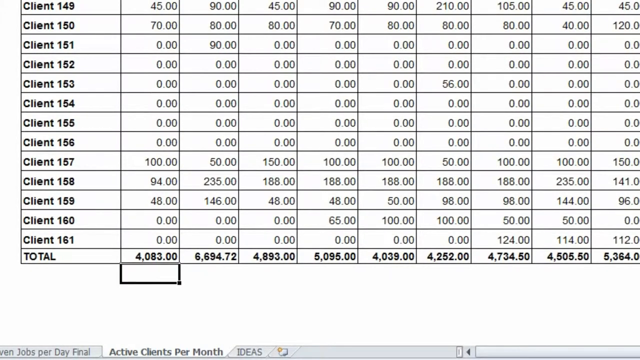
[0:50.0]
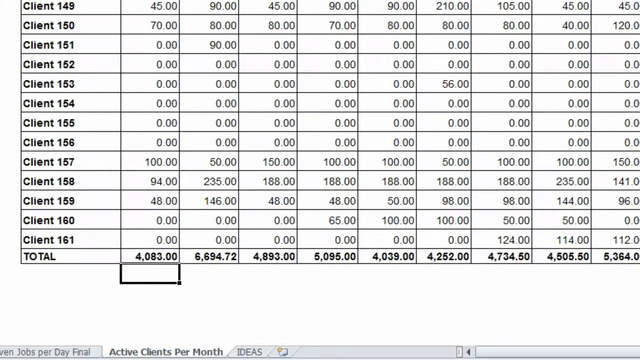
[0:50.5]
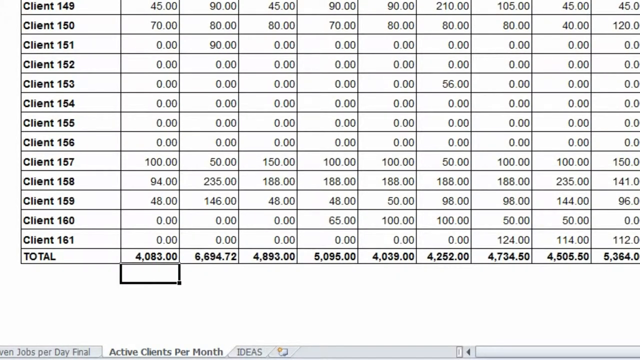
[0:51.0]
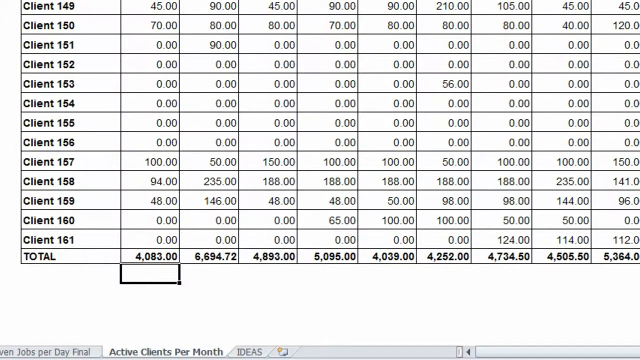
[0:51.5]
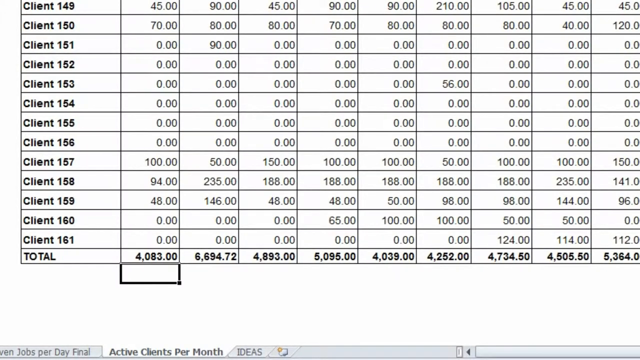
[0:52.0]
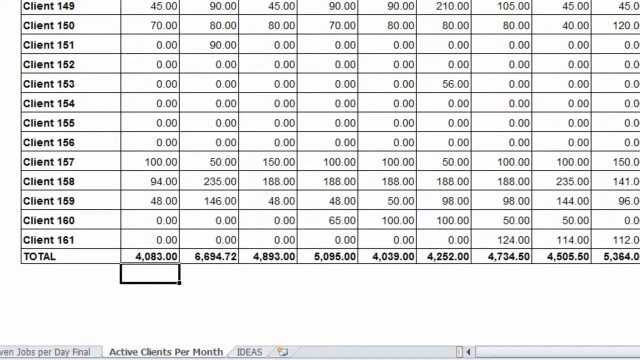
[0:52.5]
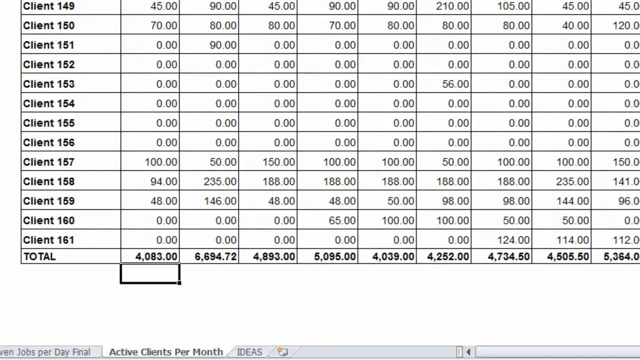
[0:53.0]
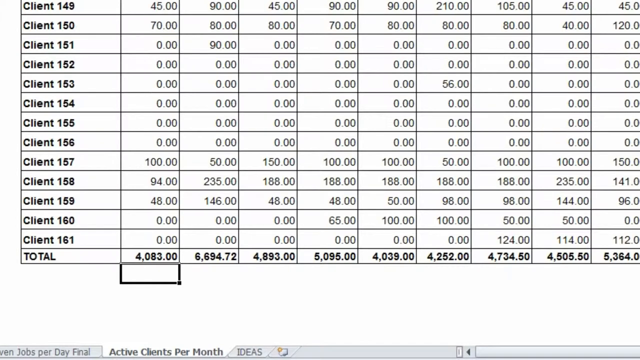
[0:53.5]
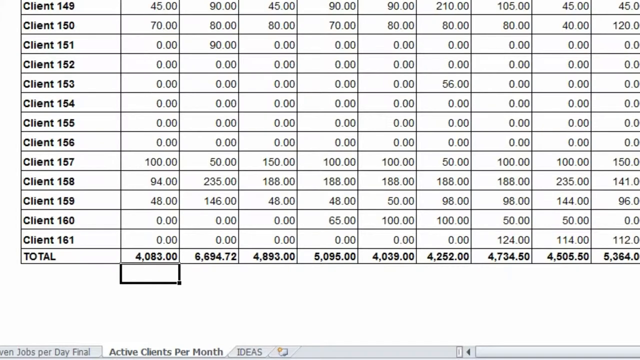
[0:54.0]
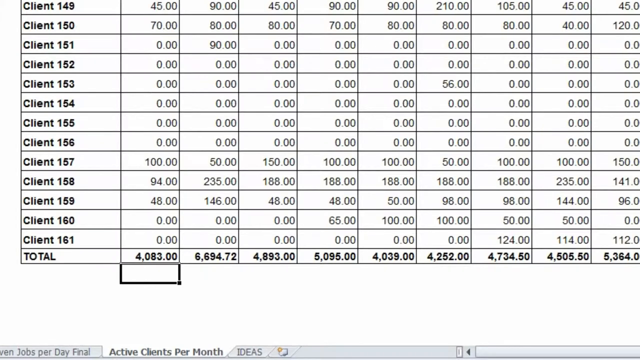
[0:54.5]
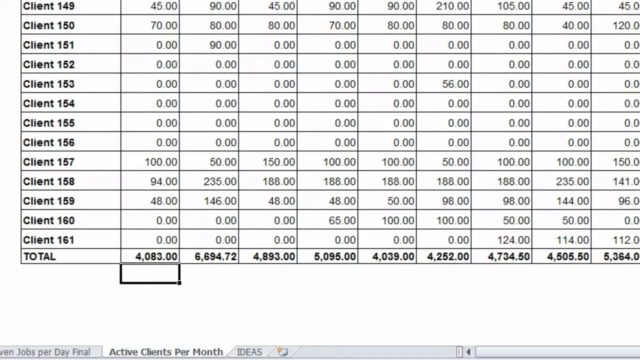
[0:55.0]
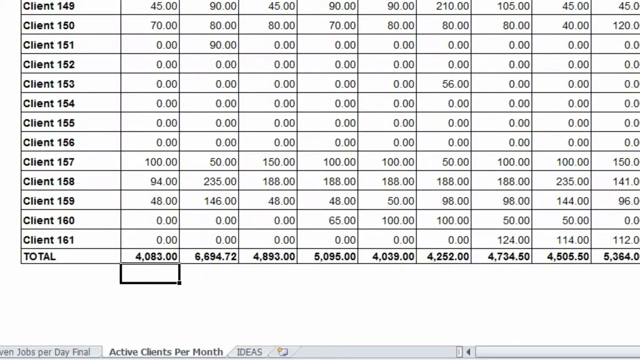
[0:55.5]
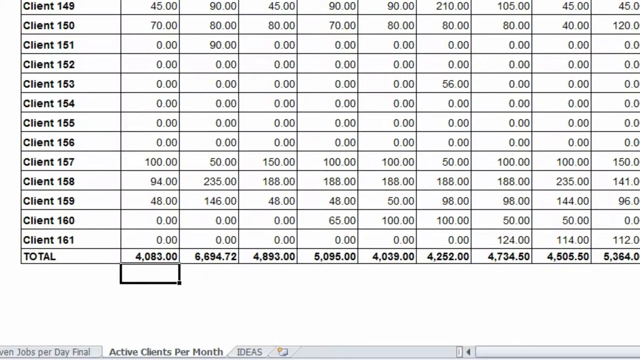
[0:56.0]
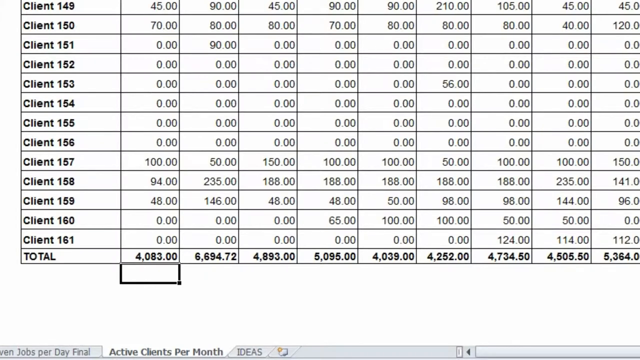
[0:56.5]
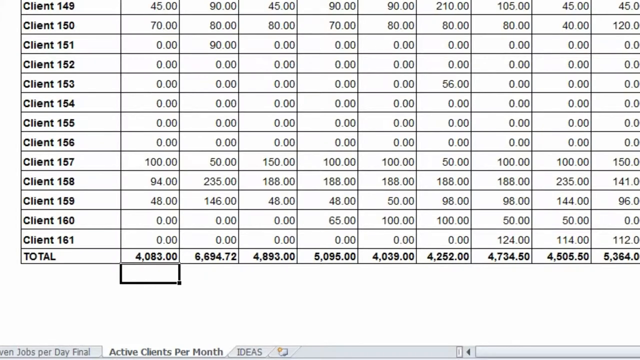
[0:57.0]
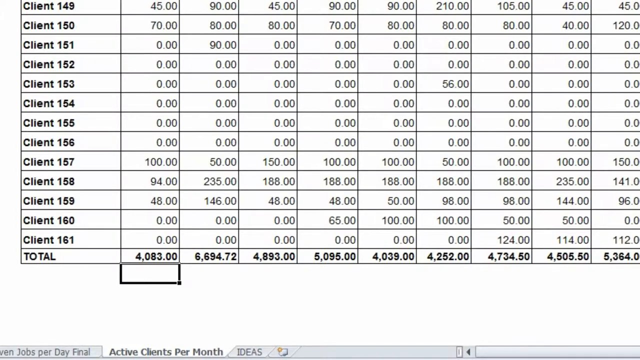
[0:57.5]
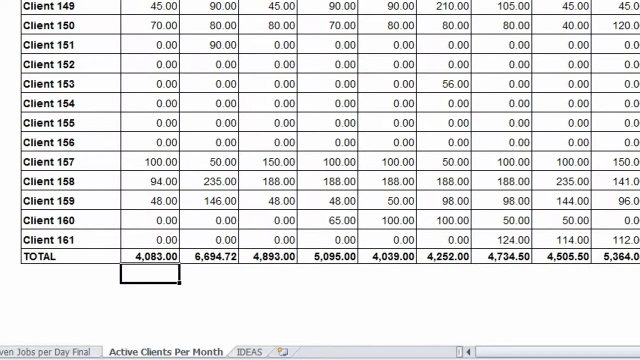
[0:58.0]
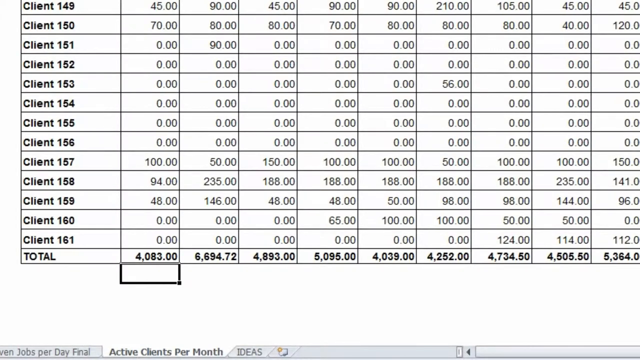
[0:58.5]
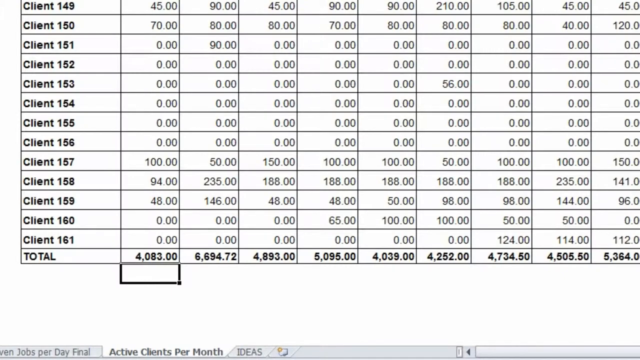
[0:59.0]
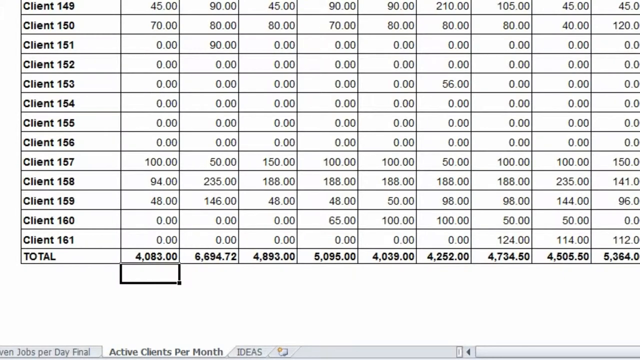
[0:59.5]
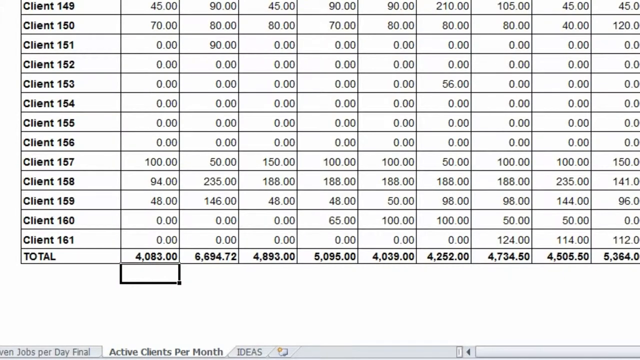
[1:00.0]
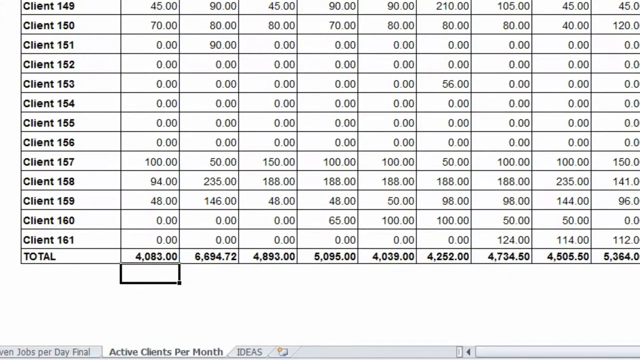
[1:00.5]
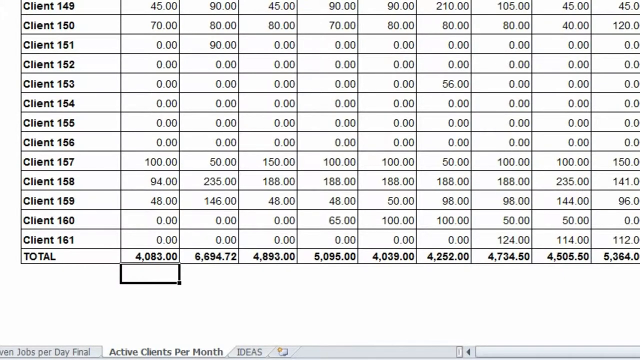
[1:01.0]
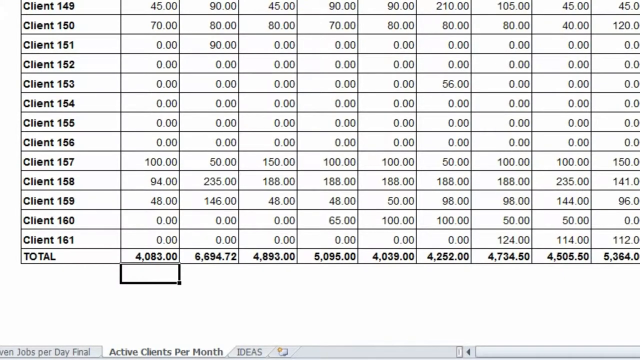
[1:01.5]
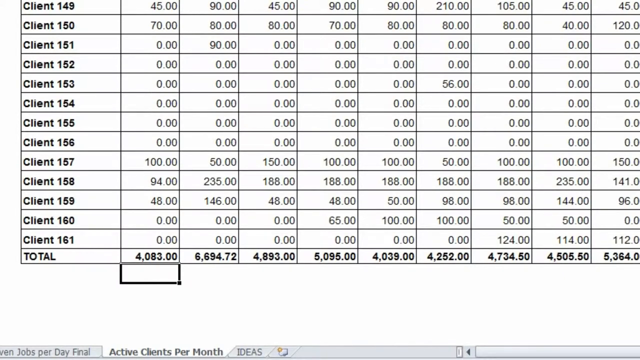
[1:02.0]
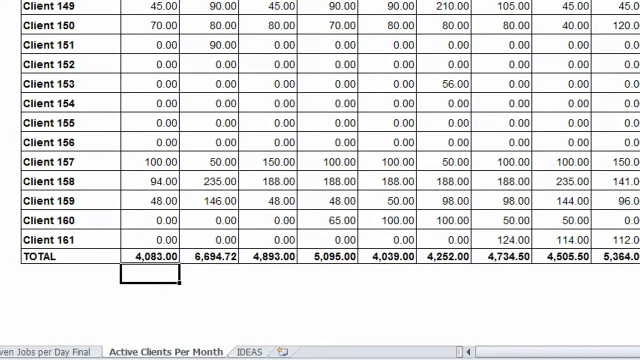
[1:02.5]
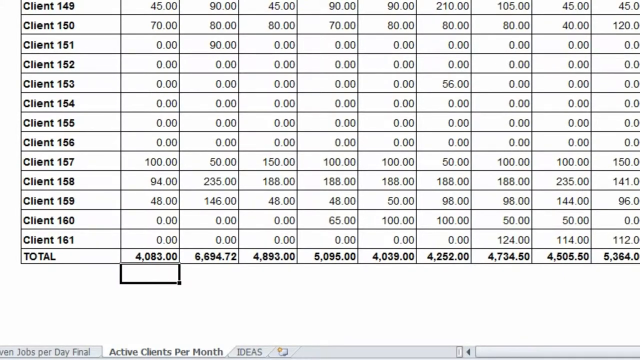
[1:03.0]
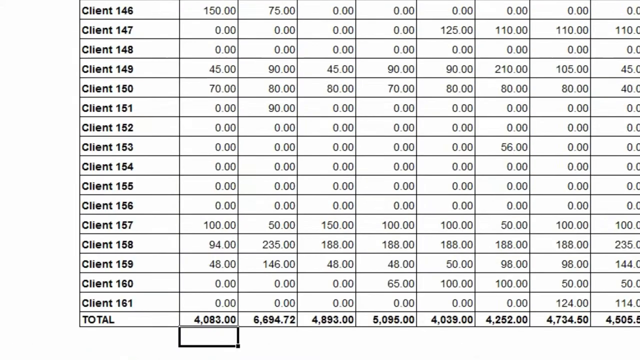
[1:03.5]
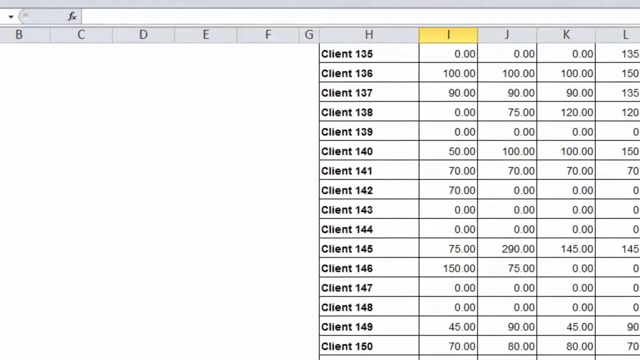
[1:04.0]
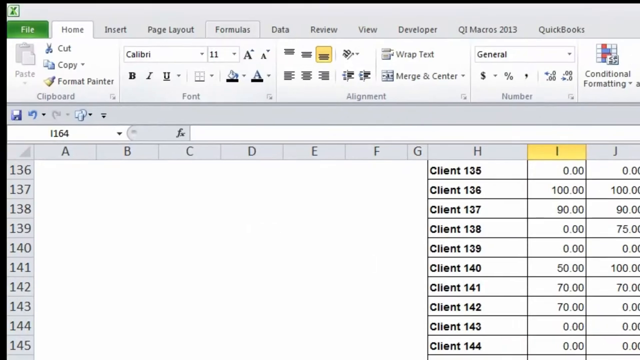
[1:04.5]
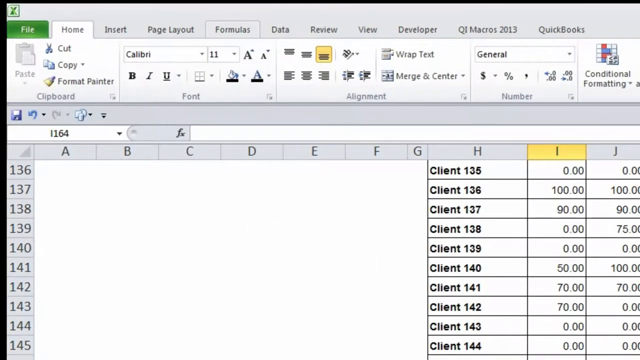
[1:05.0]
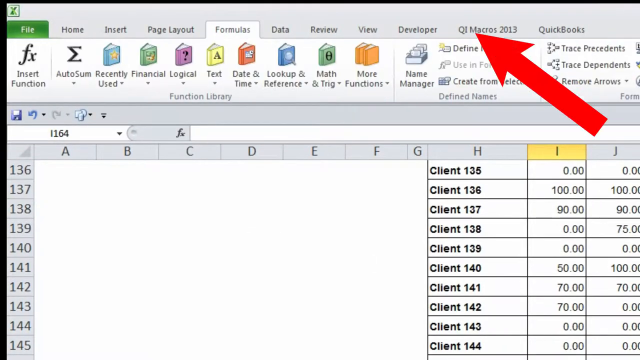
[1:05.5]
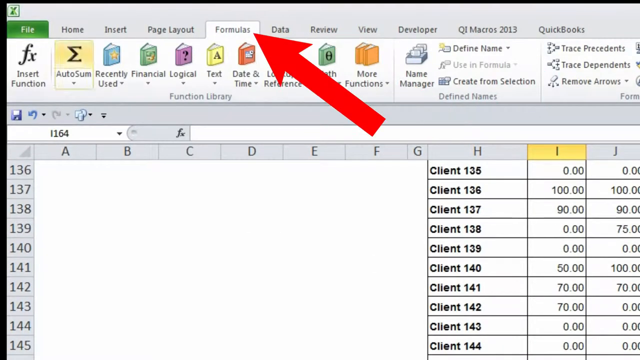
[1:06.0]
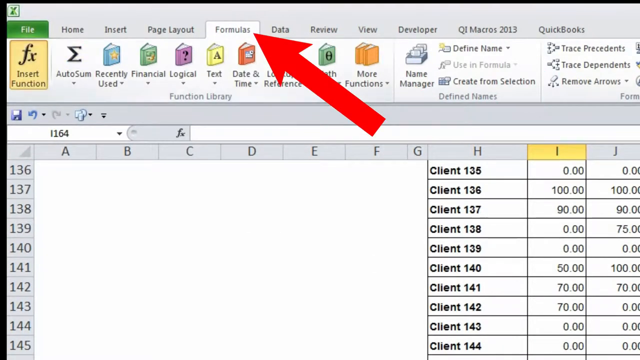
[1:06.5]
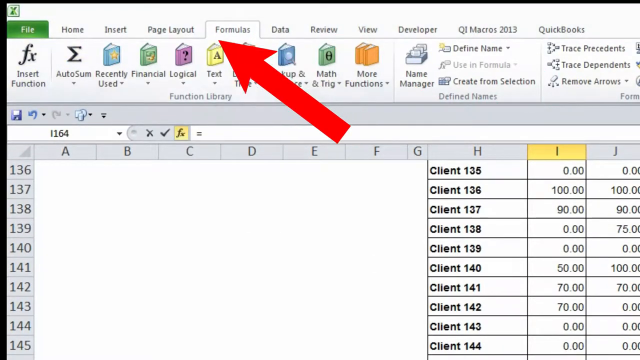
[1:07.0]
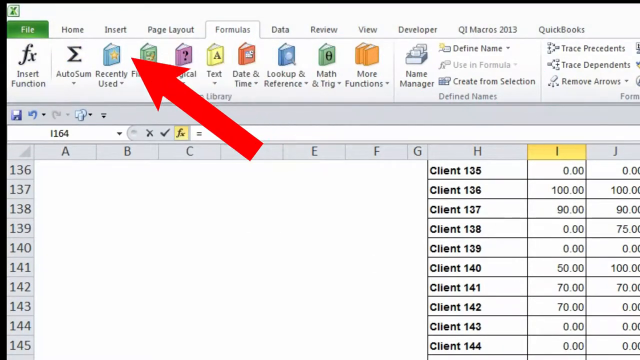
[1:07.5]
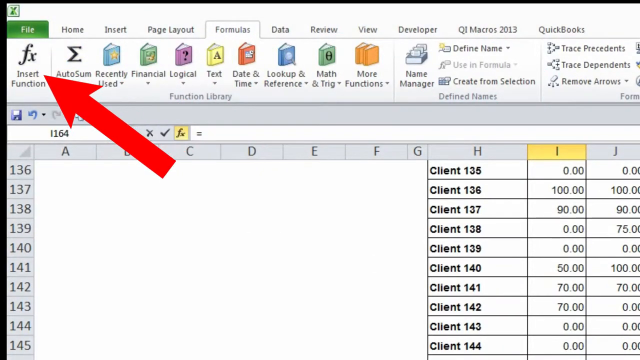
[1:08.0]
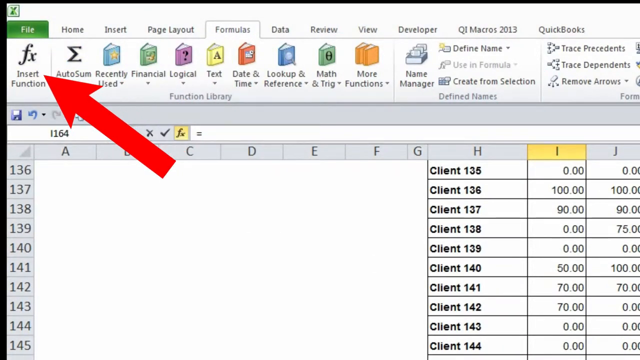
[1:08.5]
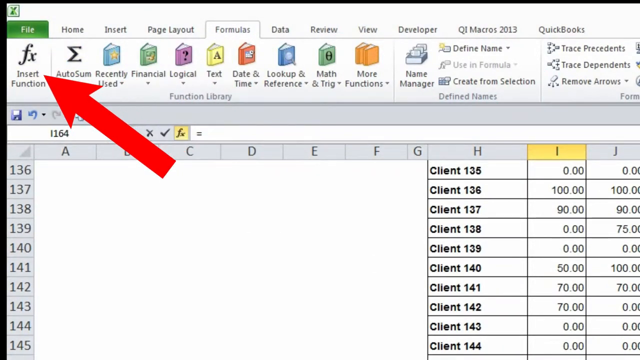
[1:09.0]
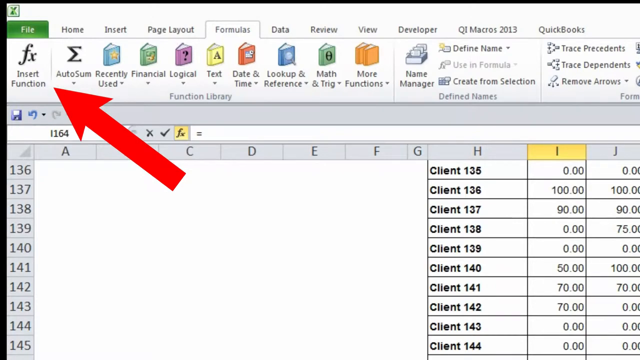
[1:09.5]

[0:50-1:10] The spreadsheet, titled "active clients by month" and apparently for a cleaning business, is a Microsoft Word-style spreadsheet. It runs from client 1 to client 161 with the 12 months of the year and how much each client was billed for the entire year. A big red arrow appears, and the person clicks on formulas, then insert function, and starts to type something beginning with "CO" before the video cuts out.